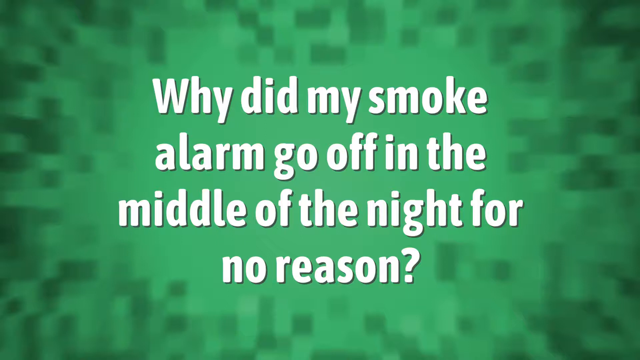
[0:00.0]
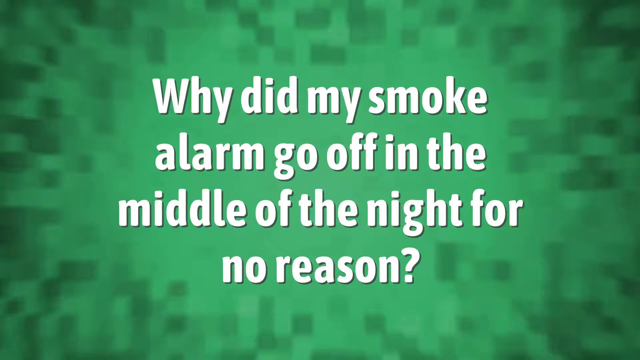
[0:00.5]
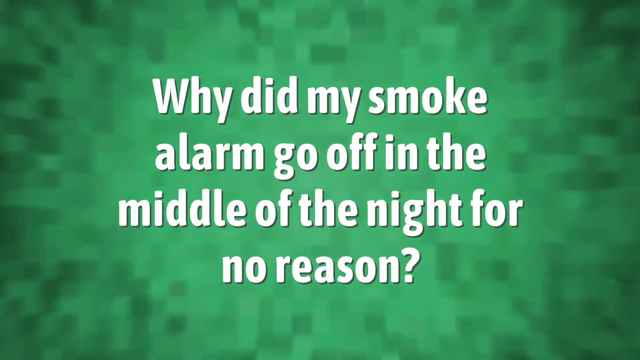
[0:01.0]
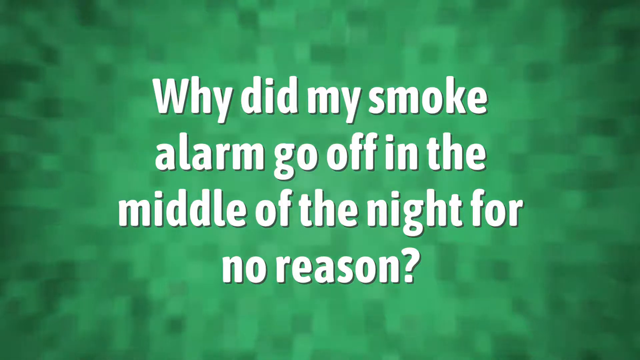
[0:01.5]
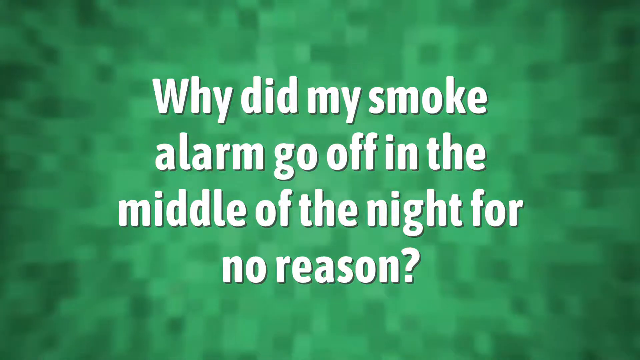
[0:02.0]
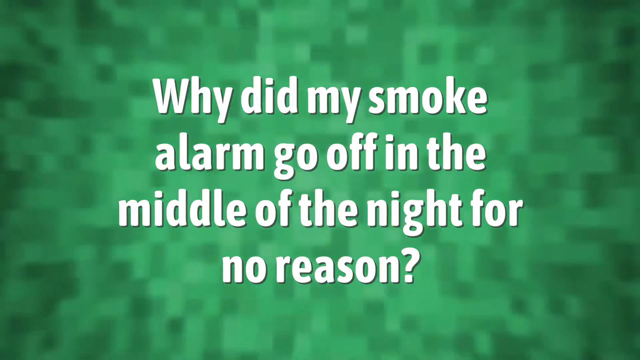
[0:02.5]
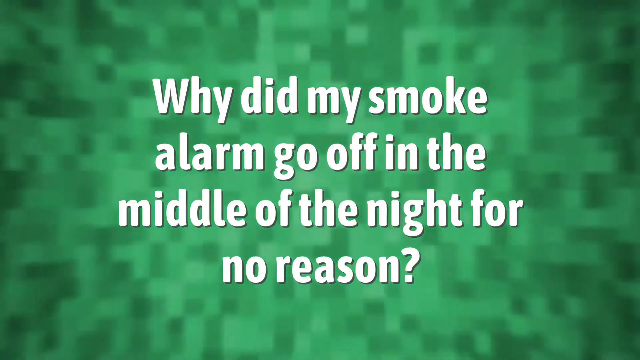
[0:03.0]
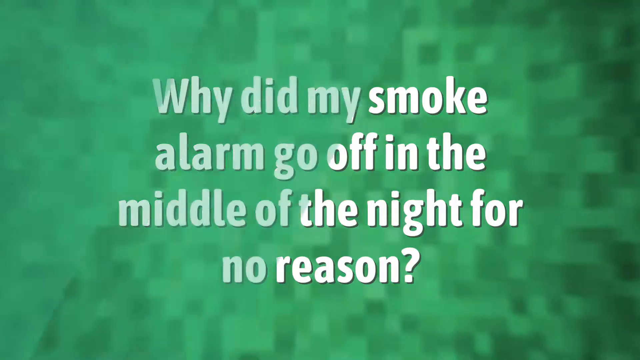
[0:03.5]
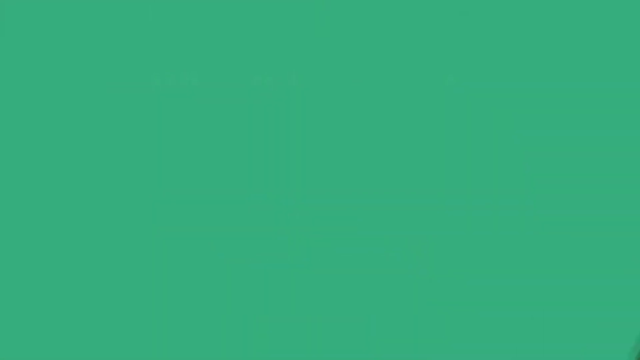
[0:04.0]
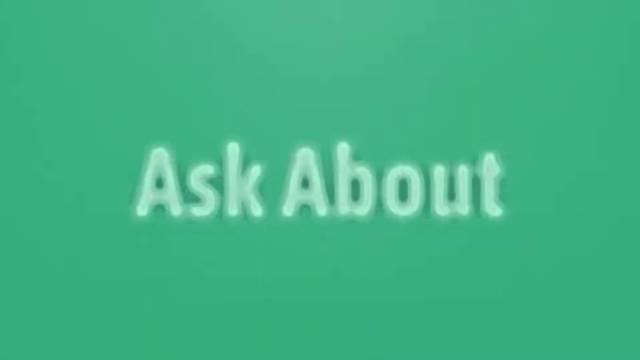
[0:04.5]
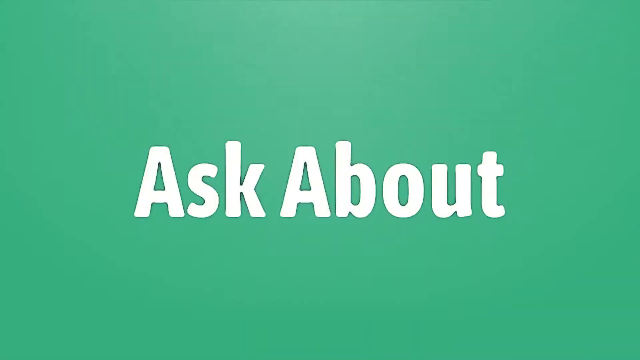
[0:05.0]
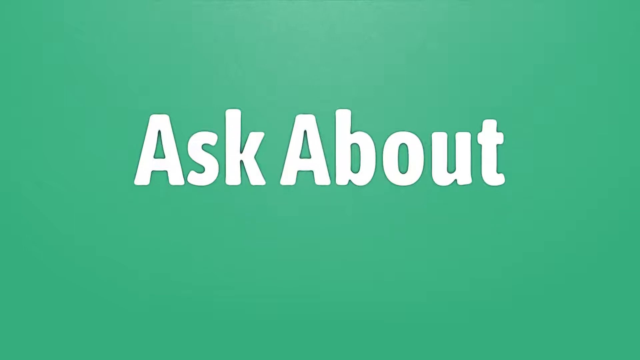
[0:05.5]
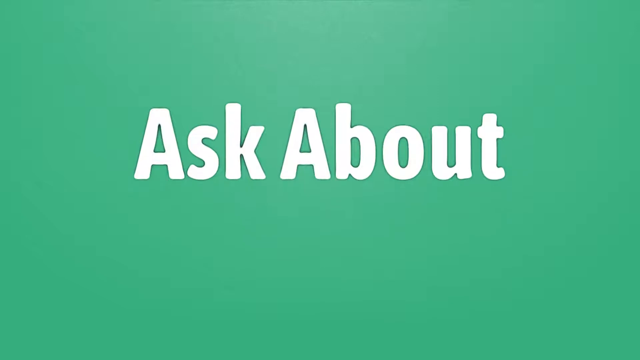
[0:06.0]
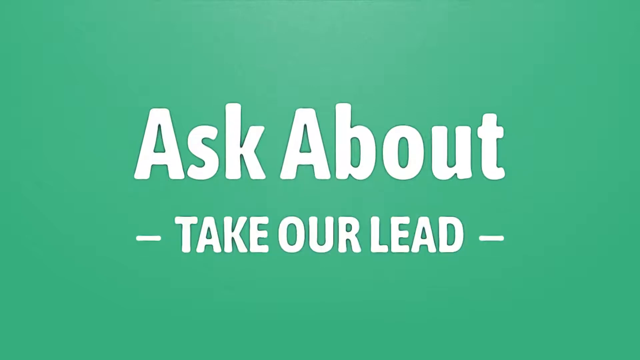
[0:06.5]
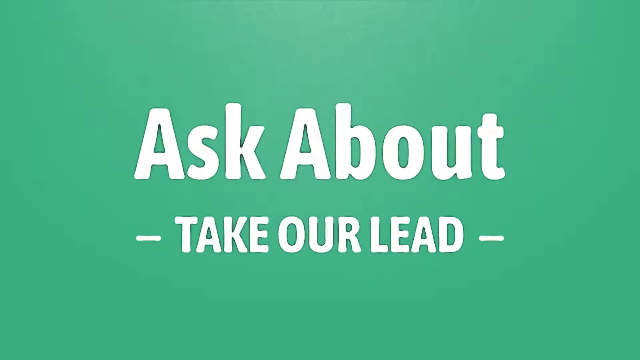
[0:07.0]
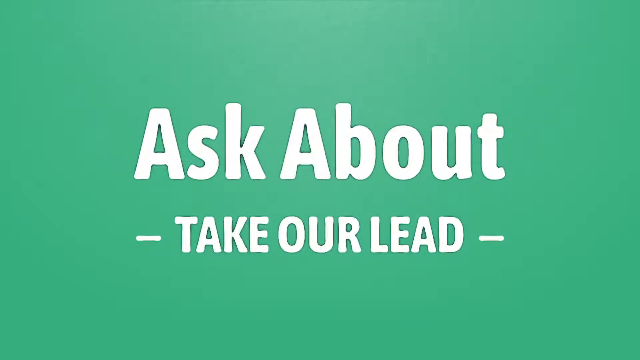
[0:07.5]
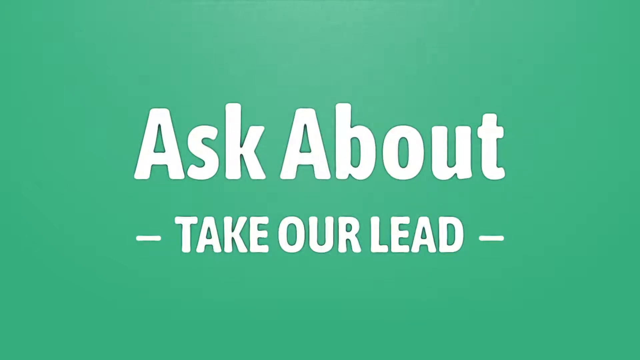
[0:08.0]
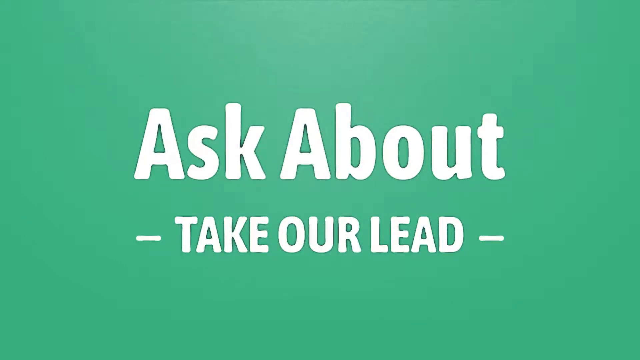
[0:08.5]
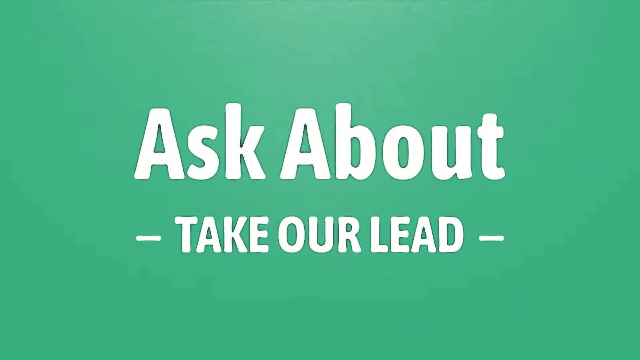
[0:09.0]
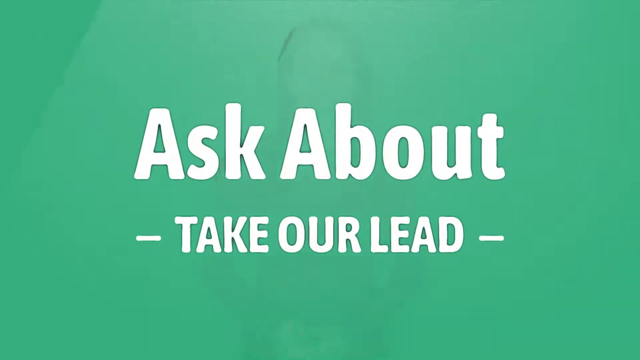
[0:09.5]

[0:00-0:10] The video opens on a screen in multiple shades of green. In the center, in white block letters, it says "Why did my smoke alarm go off in the middle of the night for no reason?" The next screen says "Ask about" in white bold letters, along with "Take our lead," also in white lettering on a green backdrop. It then slides to a woman standing in front of a green background. She has dark brown hair and wears a purple long-sleeve shirt and a green shirt, and she is speaking toward the camera.